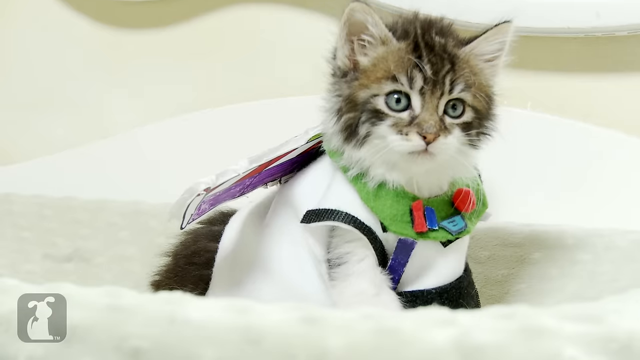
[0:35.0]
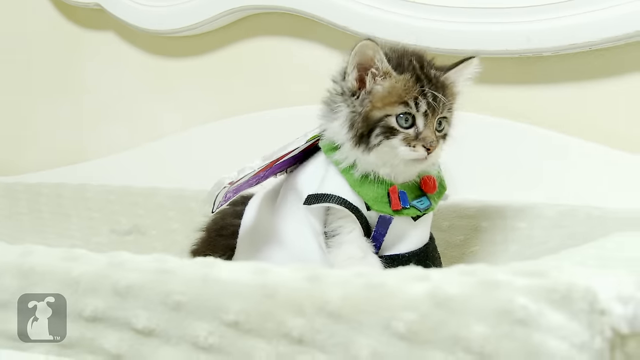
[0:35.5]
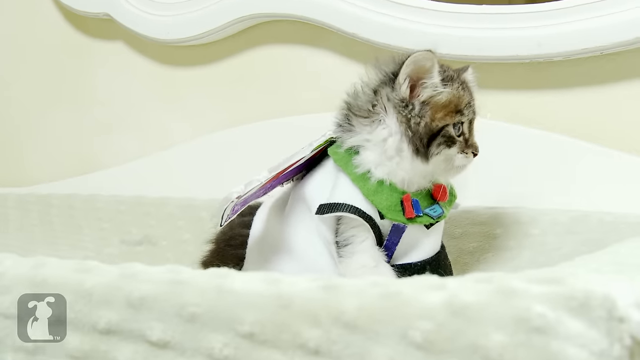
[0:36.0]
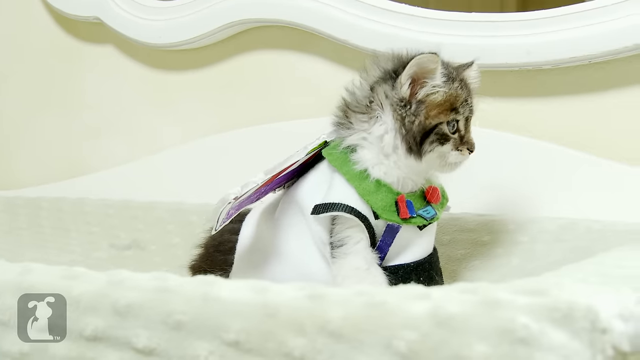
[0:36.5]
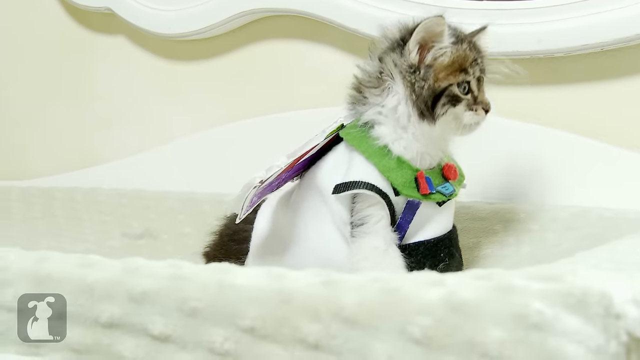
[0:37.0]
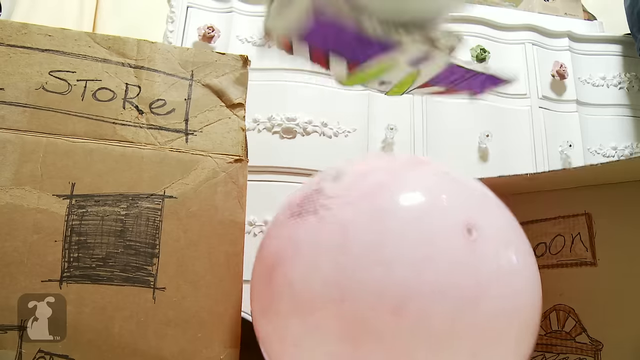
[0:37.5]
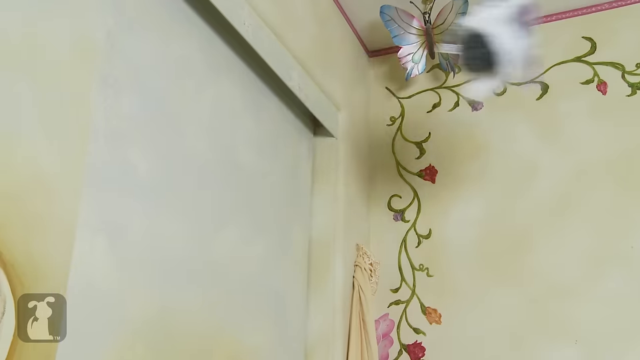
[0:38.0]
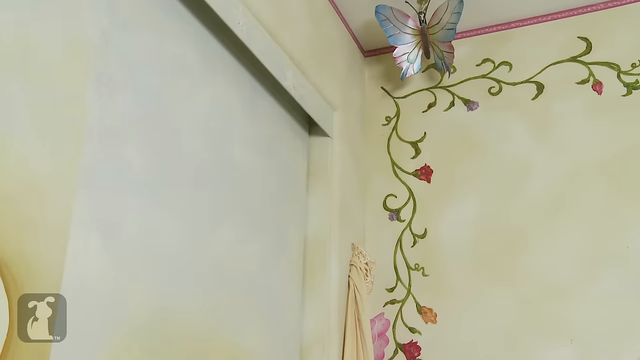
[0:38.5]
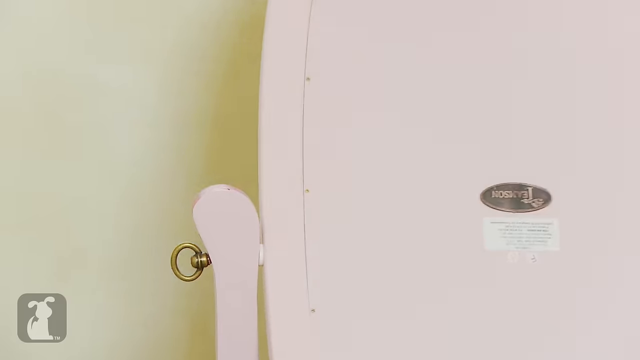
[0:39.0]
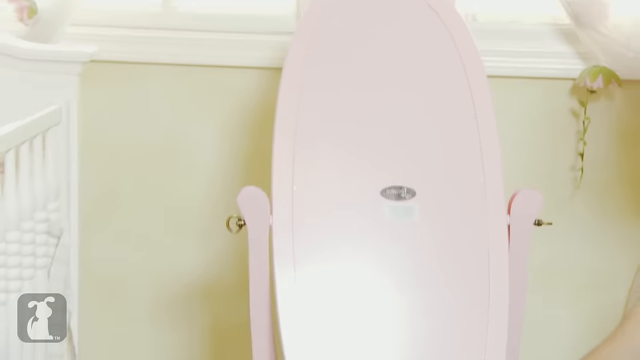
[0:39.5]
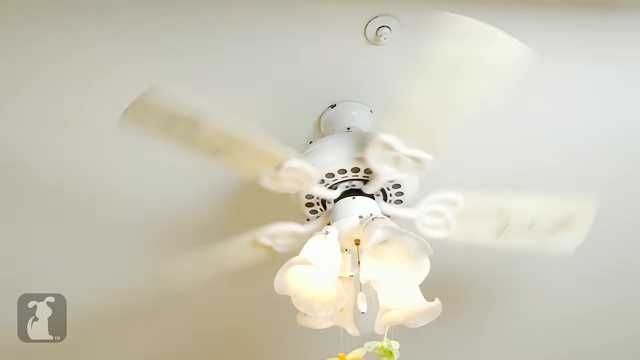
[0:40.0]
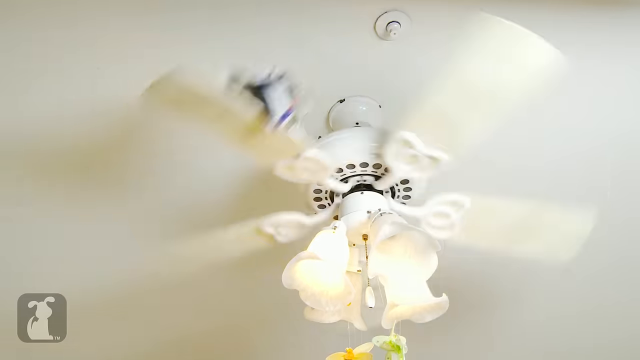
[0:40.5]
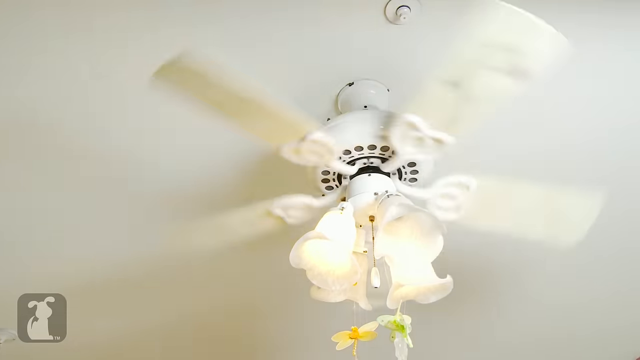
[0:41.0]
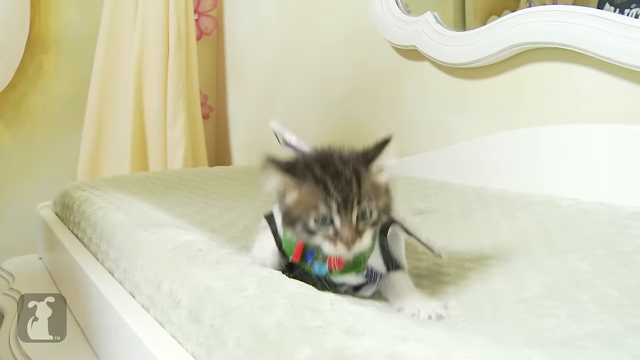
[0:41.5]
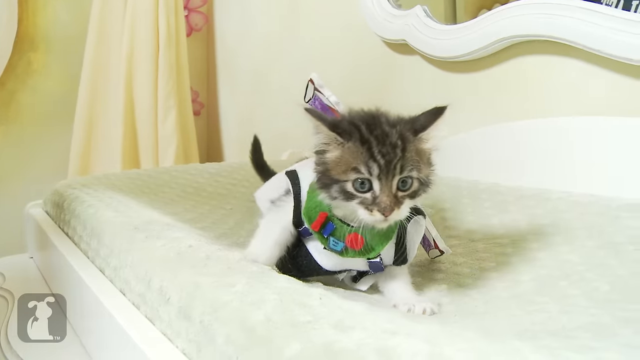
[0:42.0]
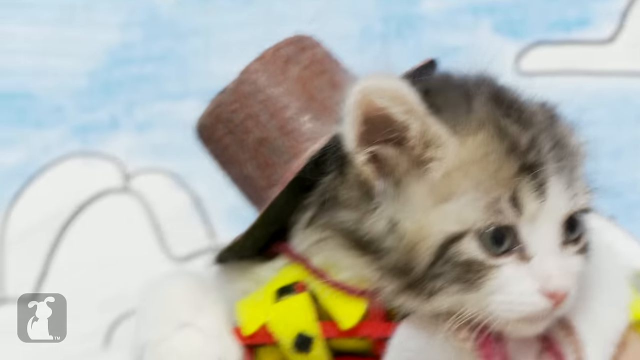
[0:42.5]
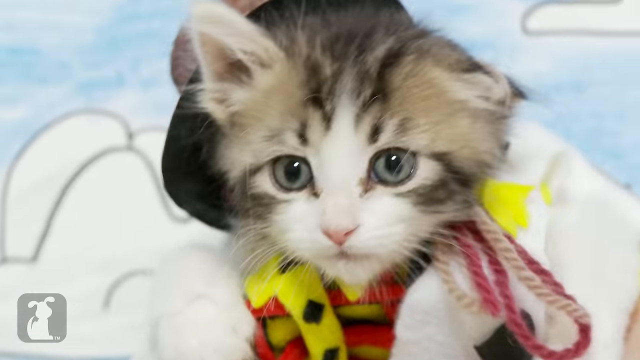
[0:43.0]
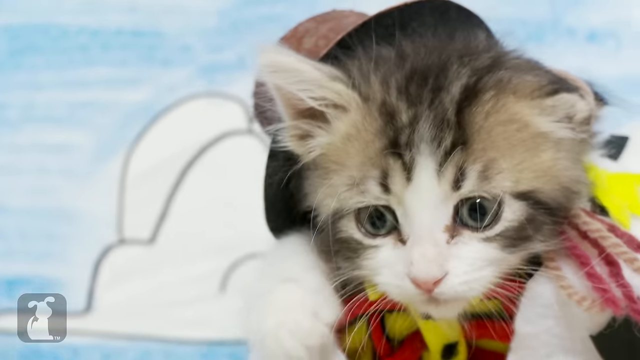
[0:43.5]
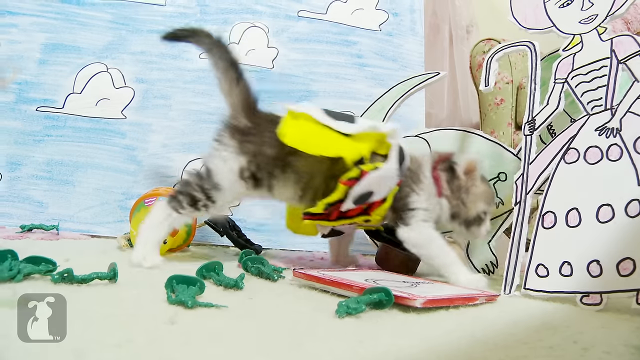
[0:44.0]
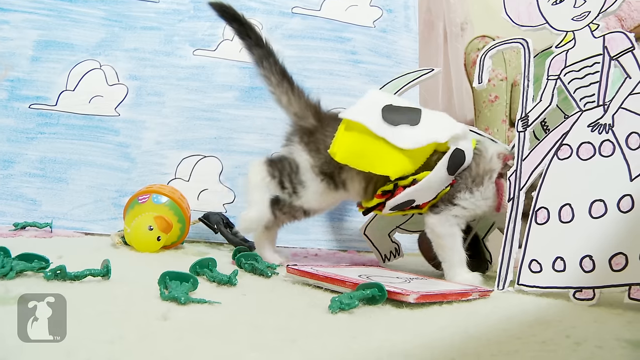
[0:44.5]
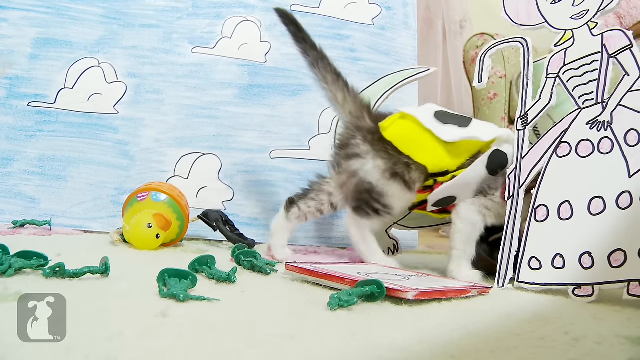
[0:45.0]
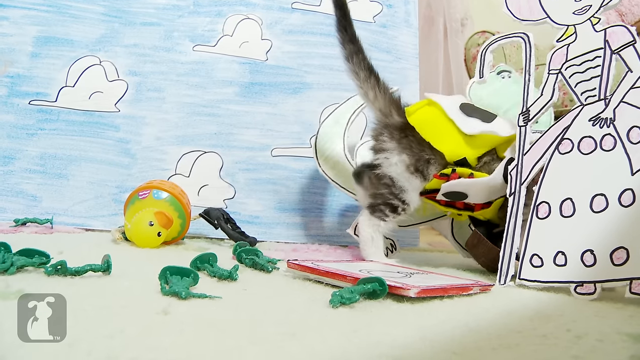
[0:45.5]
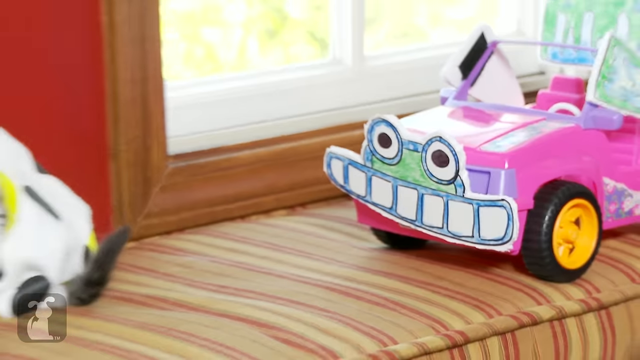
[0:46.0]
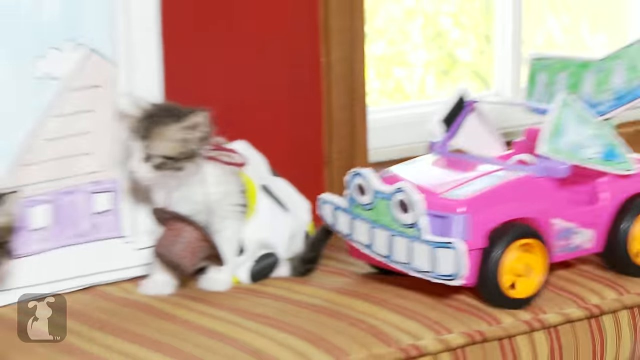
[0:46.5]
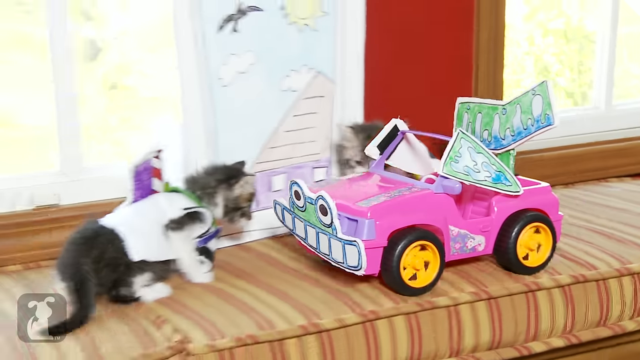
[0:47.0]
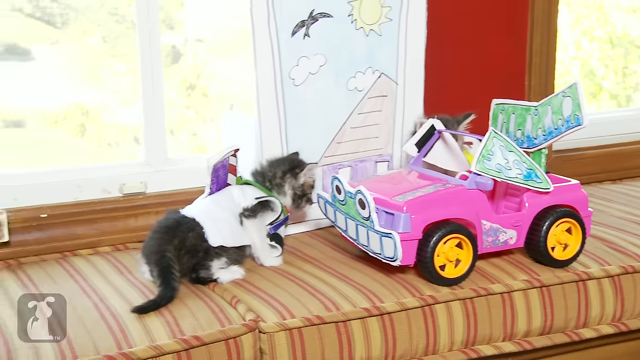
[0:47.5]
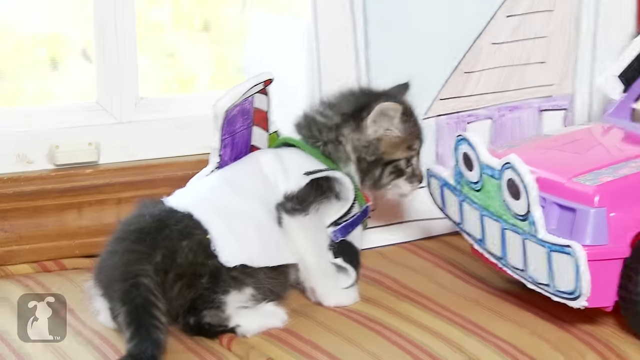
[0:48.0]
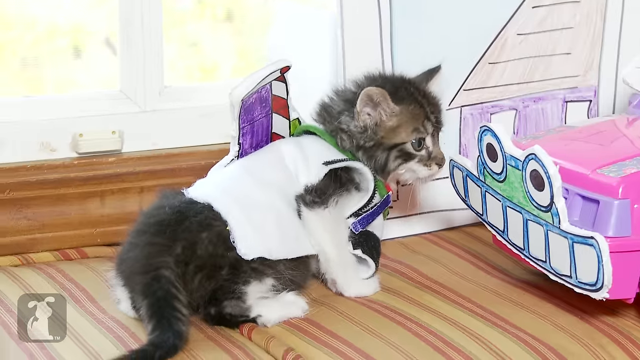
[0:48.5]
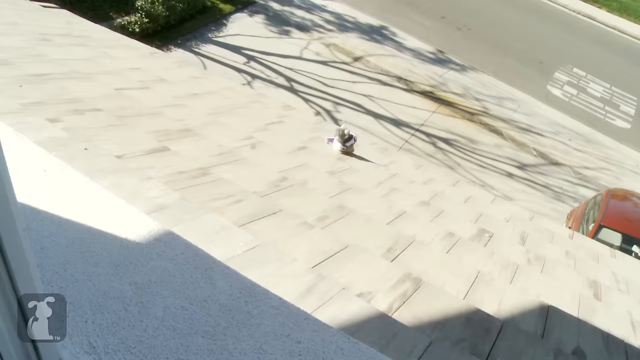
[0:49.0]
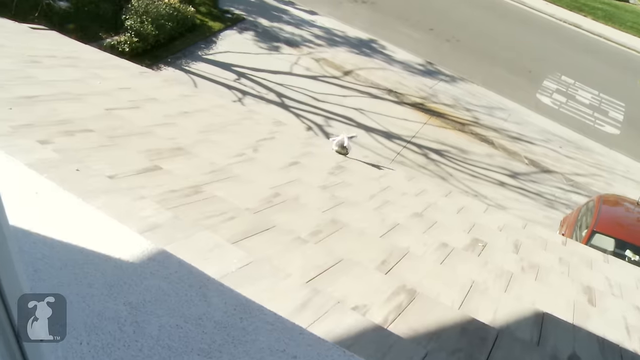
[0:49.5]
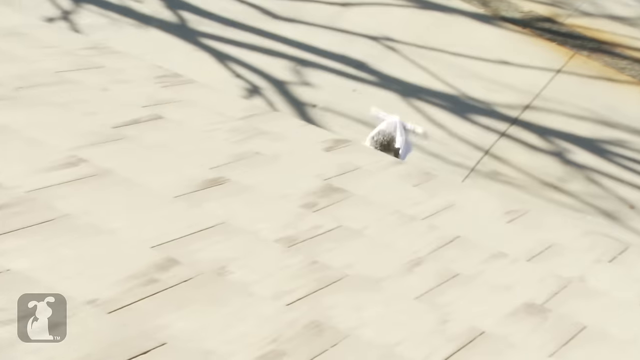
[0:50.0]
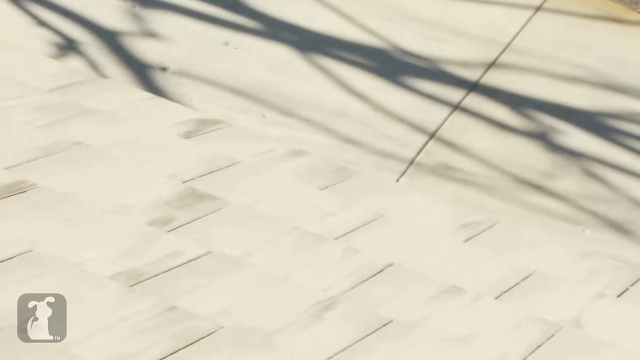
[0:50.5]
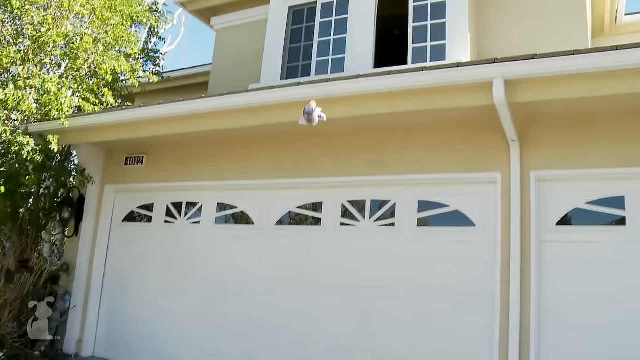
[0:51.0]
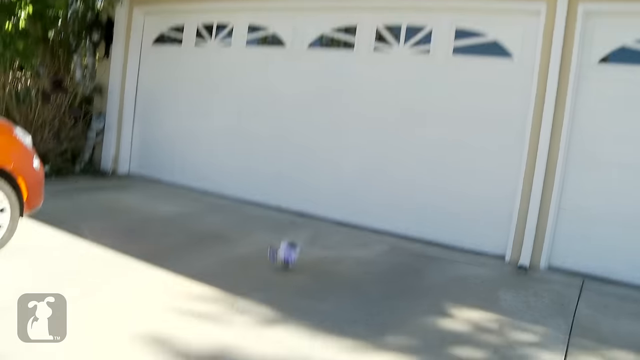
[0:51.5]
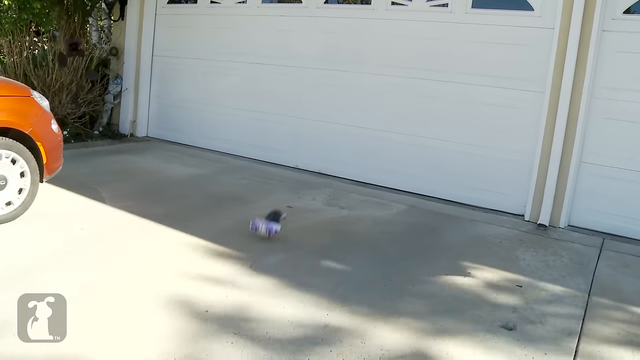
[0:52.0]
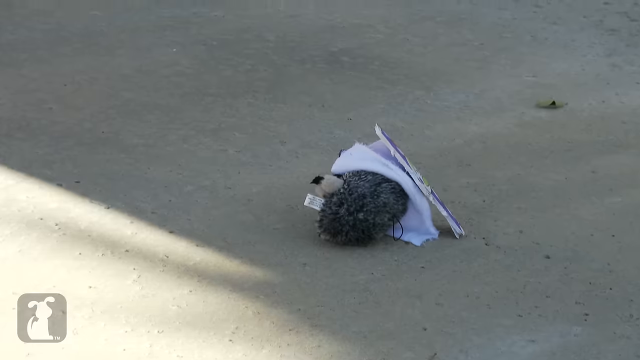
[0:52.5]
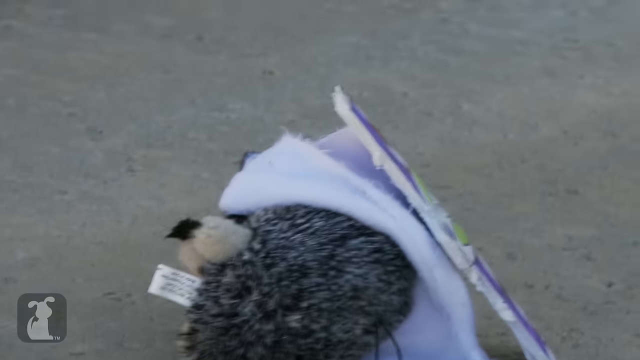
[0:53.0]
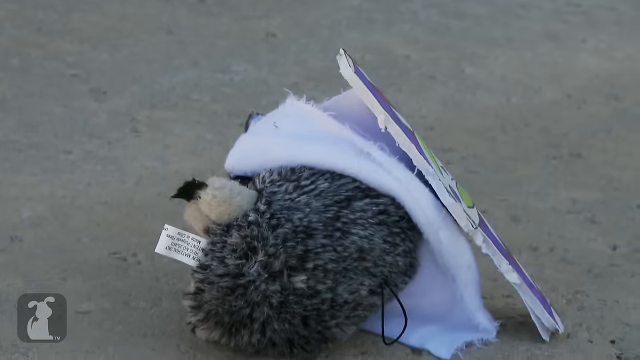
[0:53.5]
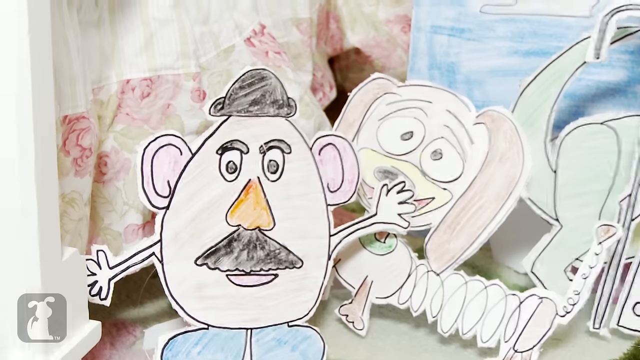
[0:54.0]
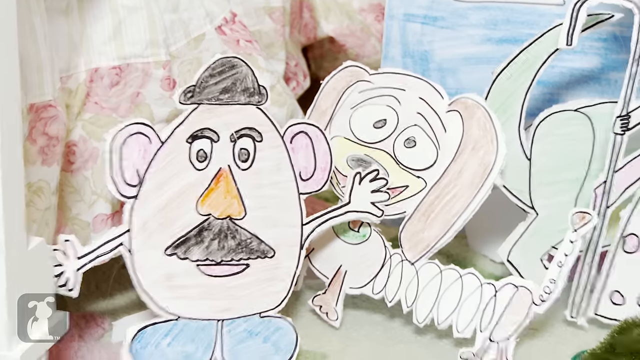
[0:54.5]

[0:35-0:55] Two kittens are both wearing cardboard wings or similar. At one point one of the kittens is accosted by a toy car, which seems to frighten it. Another kitten tries very hard to slink off and hide behind some cardboard props drawn to resemble a background, likely also part of a toy world scene. One of the kittens then appears to be pushed out of the window by one of the other toys, and the faces of cardboard characters show horror. What looks like the kitten flies out of a window and rolls down some stairs; only when it stops does it become clear that it is a fuzzy animal that is not real.